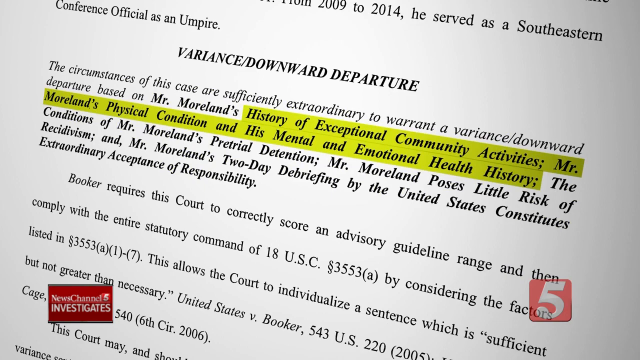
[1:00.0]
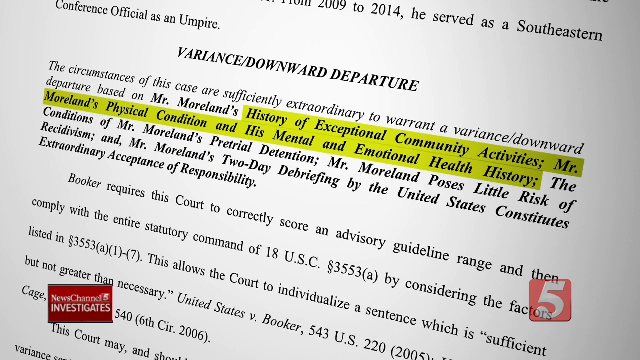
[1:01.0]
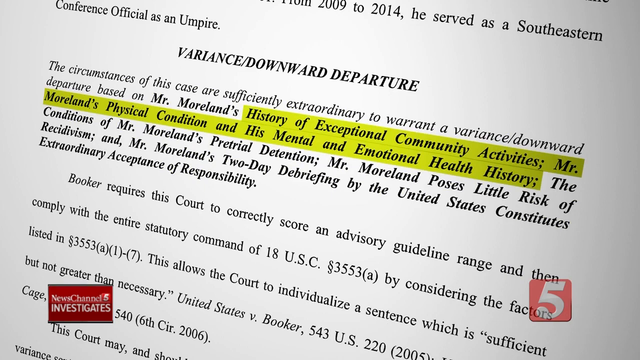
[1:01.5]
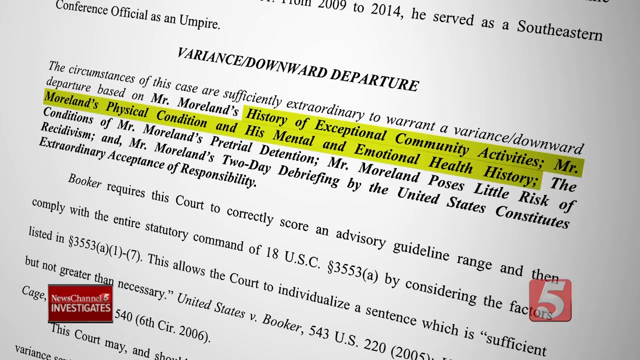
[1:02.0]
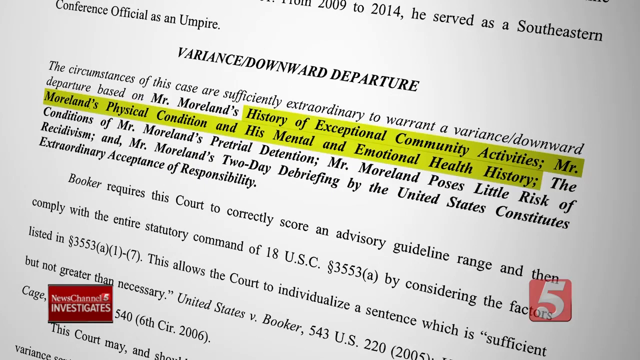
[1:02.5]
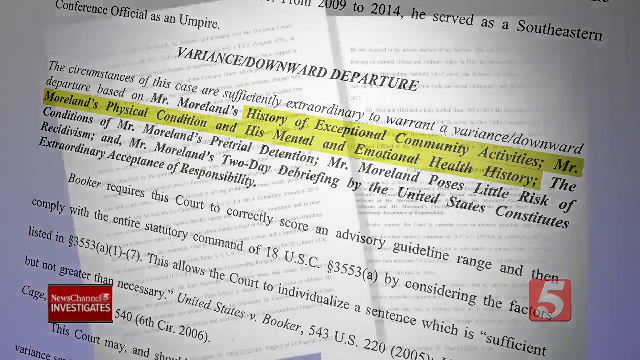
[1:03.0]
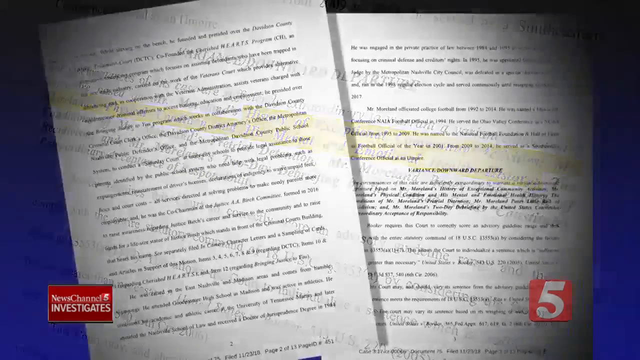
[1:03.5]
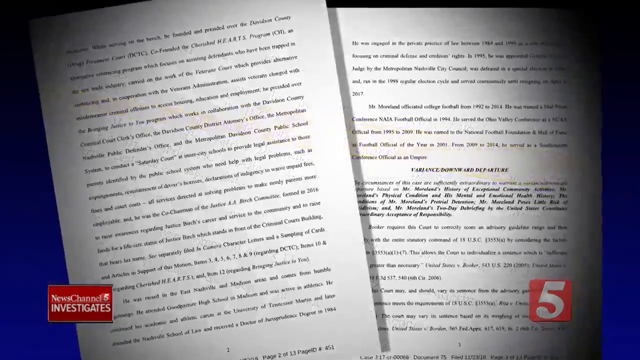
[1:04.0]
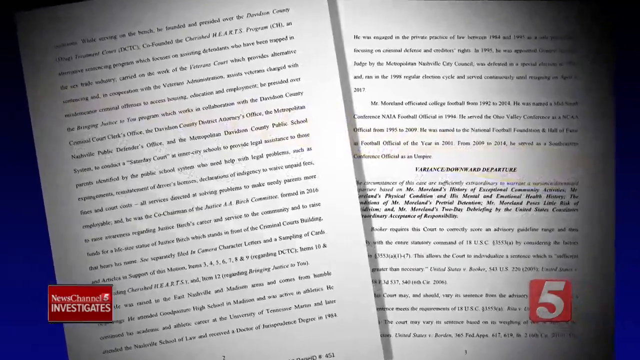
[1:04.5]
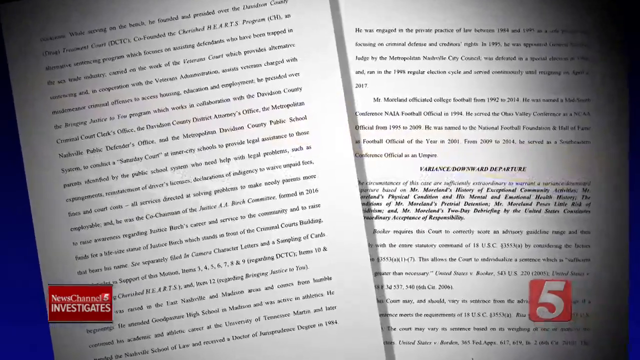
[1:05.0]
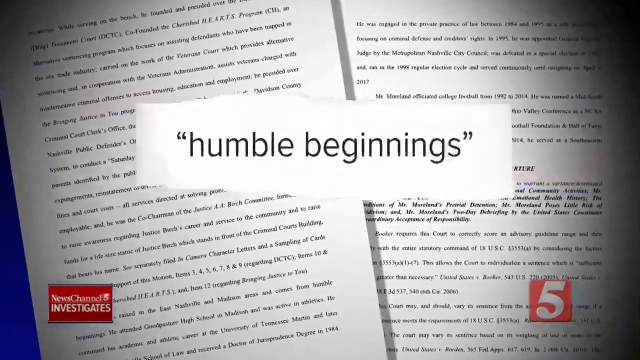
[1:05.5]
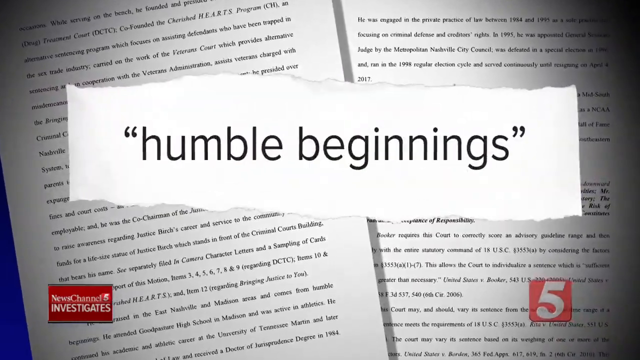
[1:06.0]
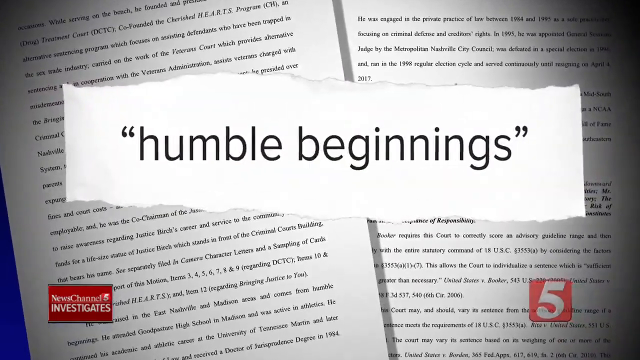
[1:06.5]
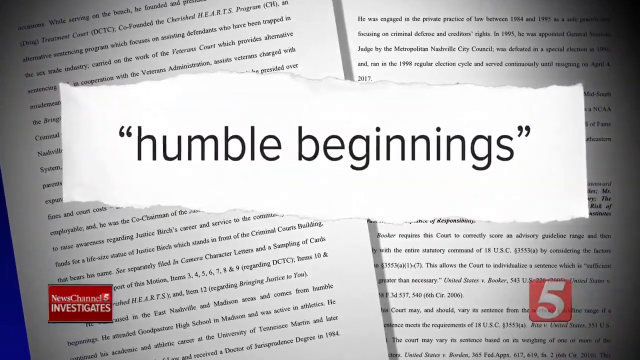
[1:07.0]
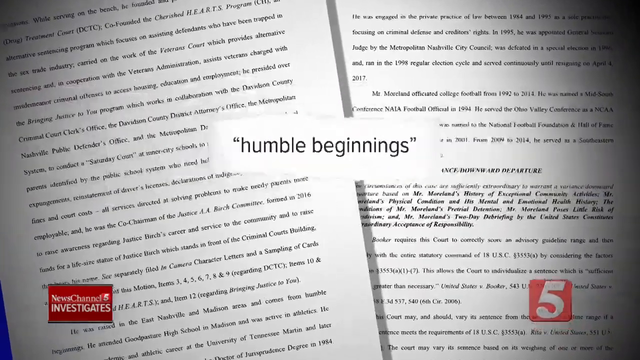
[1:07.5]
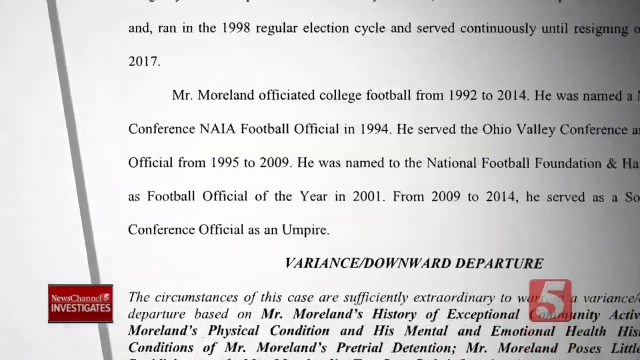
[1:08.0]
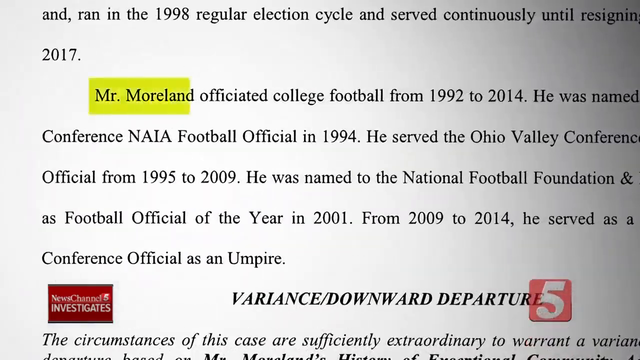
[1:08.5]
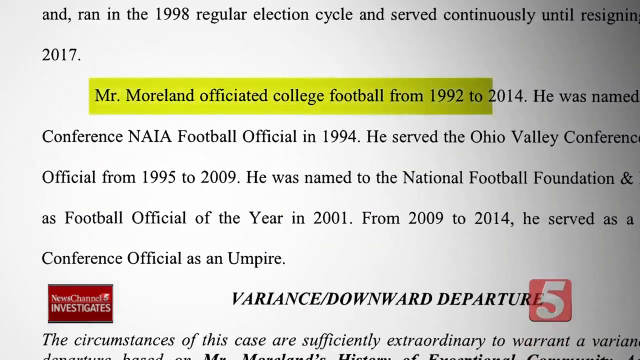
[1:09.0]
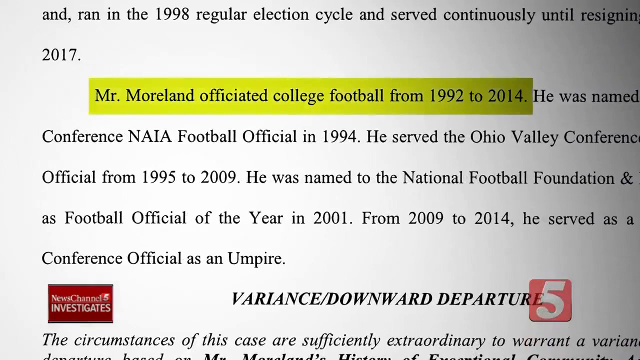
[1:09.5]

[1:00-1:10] The legal document is still shown: two pages against a blue background, the left page sitting diagonally just over the edge of the right page, with words too small to read. The camera moves closer to the documents, and the words "humble beginnings", in parentheses, appear close to the screen. After a long pause the words disappear and the camera pans in directly on the right page, where the sentence "Mr. Moreland officiated college football from 1992 to 2014" is highlighted.